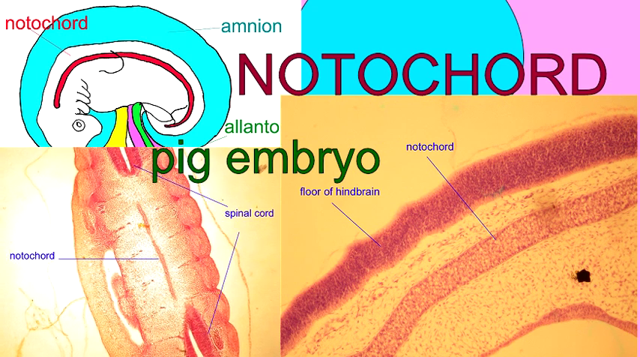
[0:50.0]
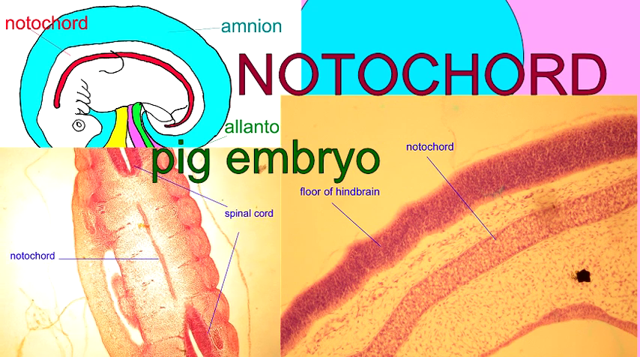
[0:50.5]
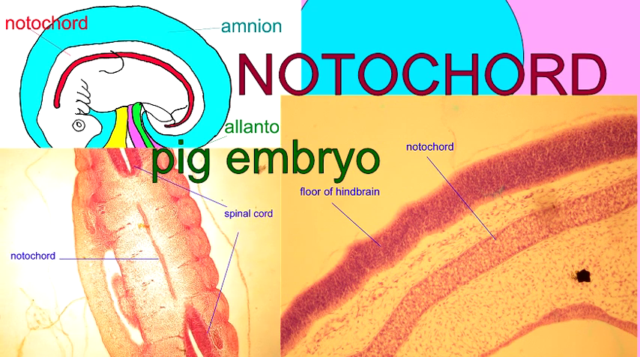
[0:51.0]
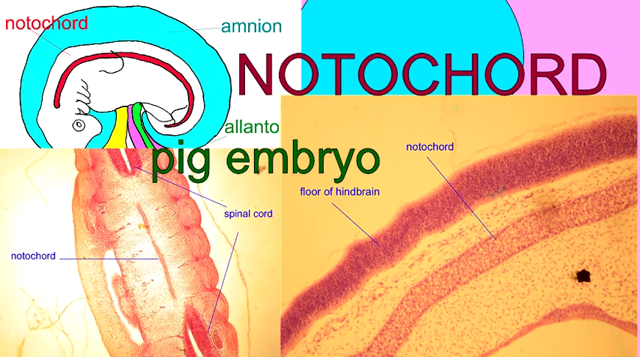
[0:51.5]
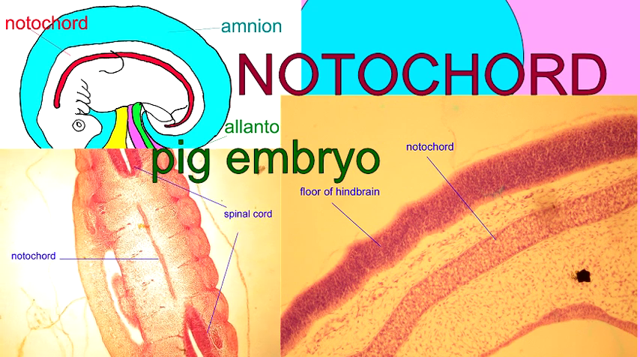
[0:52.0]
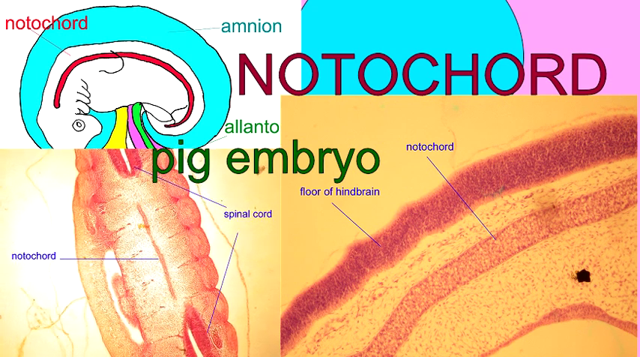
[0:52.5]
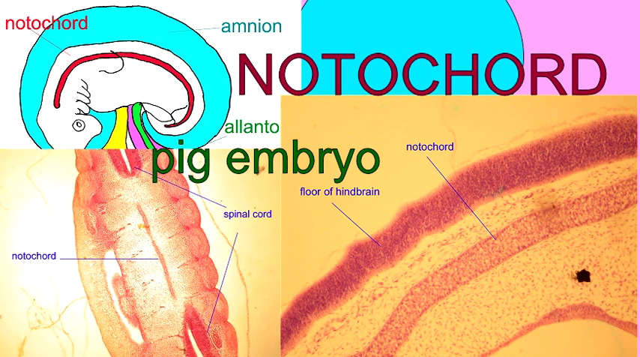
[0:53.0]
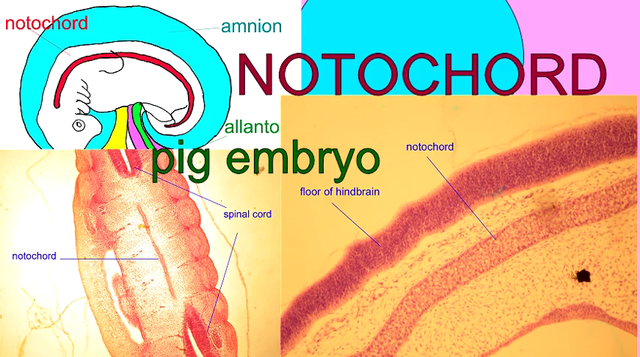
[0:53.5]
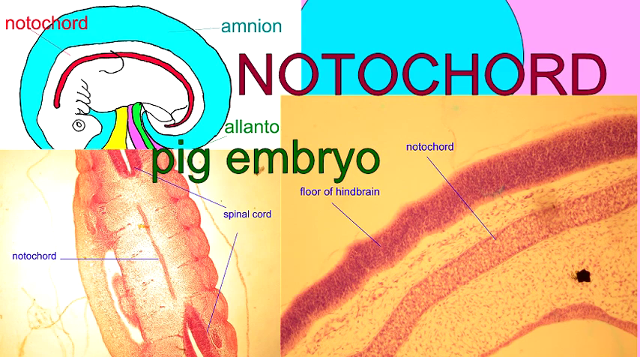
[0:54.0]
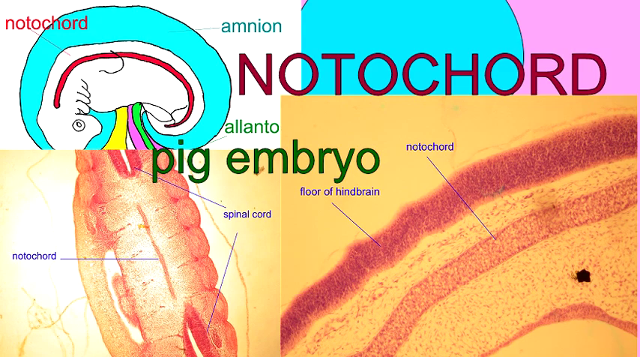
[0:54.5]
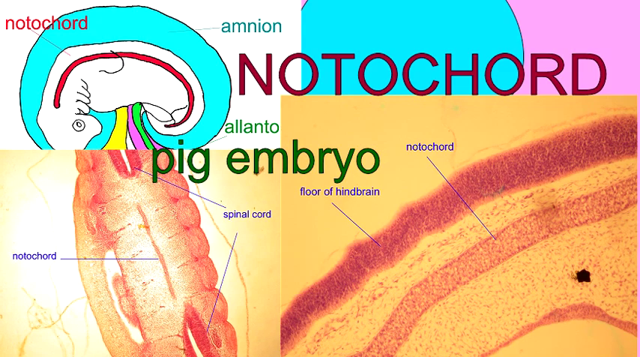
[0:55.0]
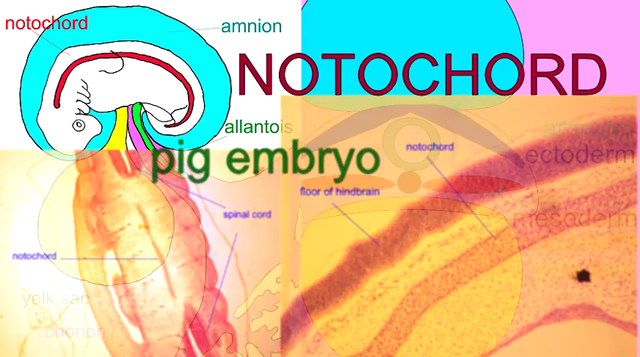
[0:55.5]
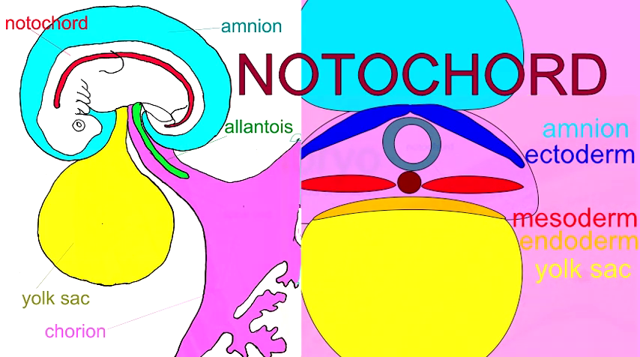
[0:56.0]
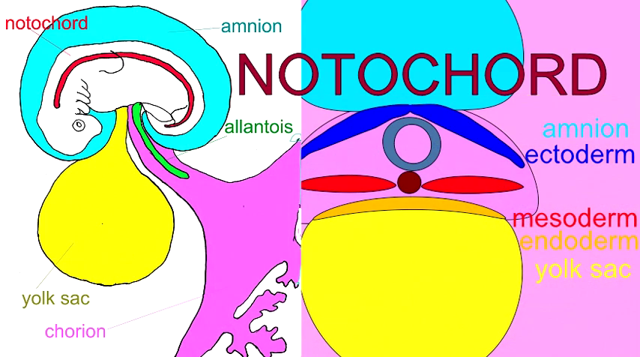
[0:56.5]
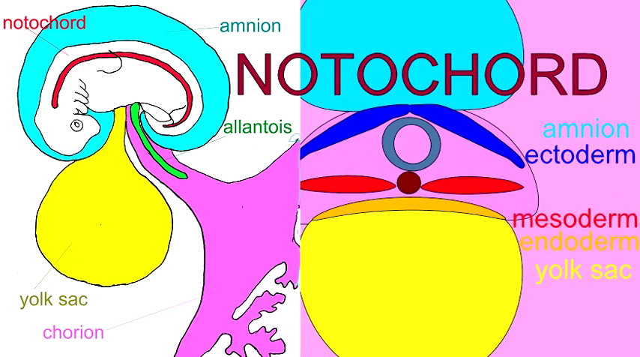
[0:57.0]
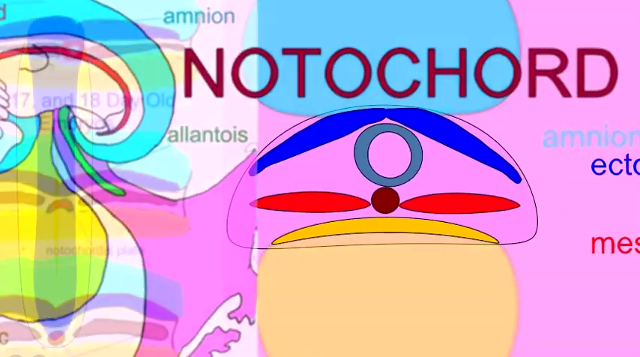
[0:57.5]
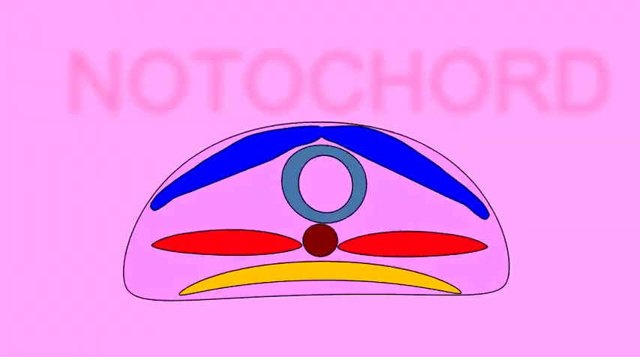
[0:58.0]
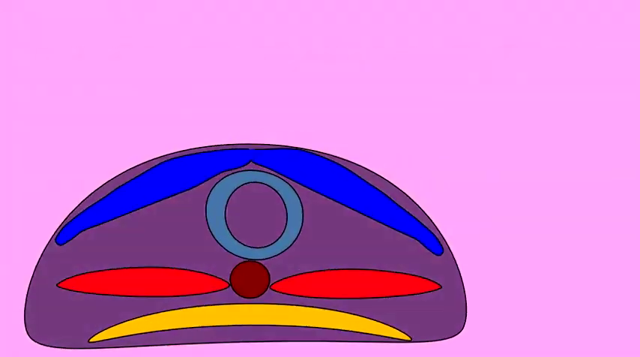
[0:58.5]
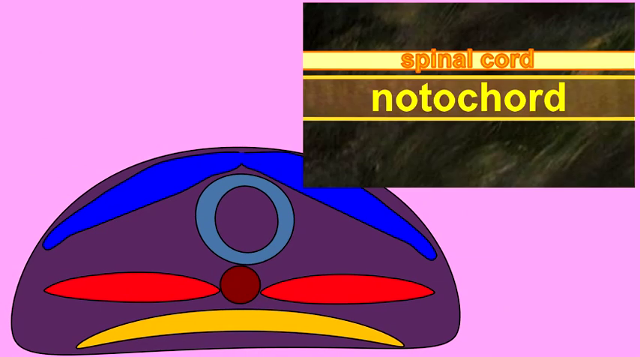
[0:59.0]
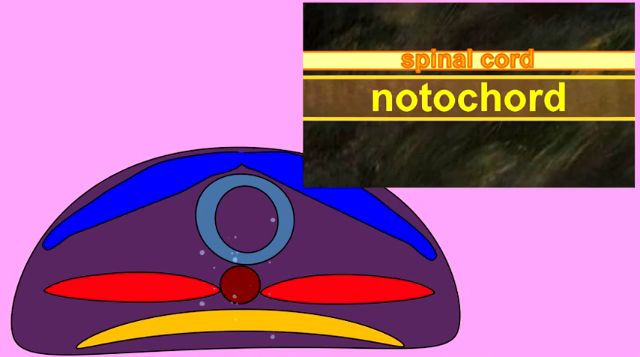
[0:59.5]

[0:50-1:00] A pig embryo is shown under the microscope, and the view narrows in to show the notochord picture. At the top of the screen is a blue section, followed by a darker green circle, and below that a smaller maroon circle. Two red oval circles are on each side of the maroon circle, and something yellow is below this. It is all enclosed in a big circle. In the top right, a pop-up with a black and gray background appears, stating the spinal cord and notochord. Bubbles float on the diagram.